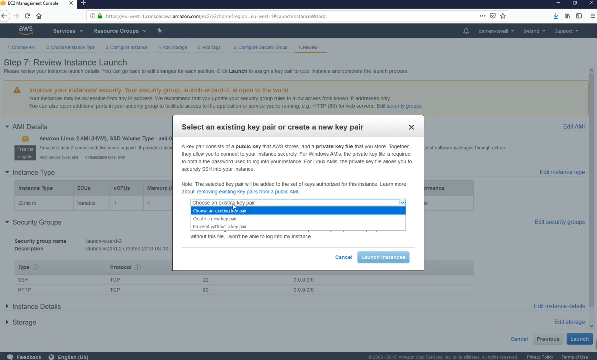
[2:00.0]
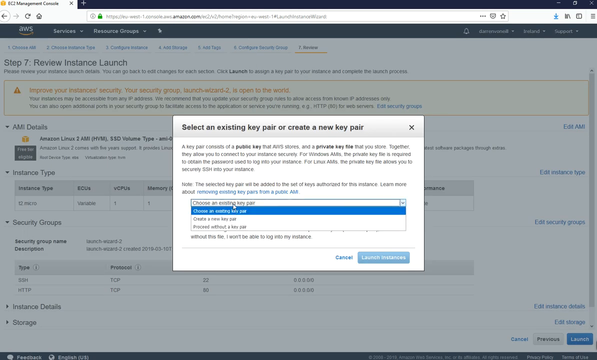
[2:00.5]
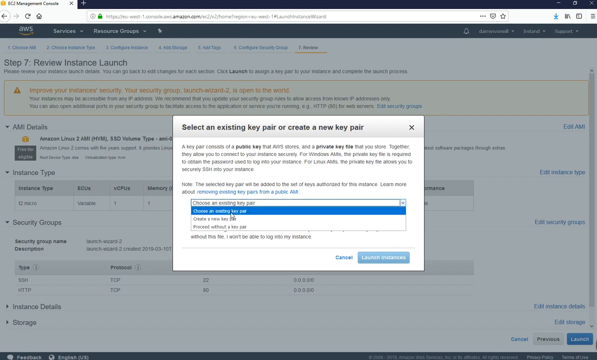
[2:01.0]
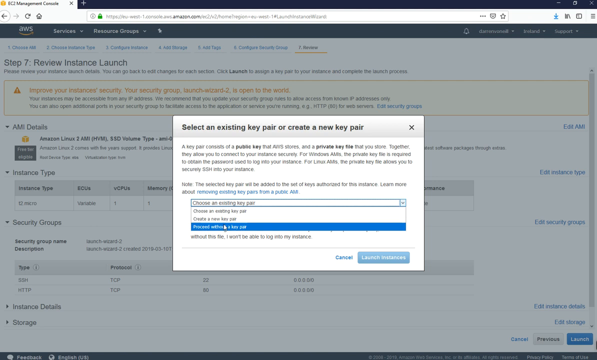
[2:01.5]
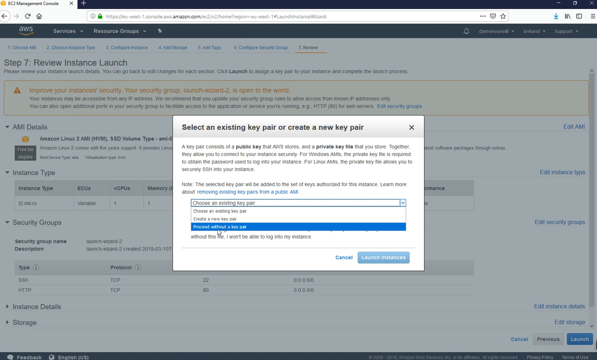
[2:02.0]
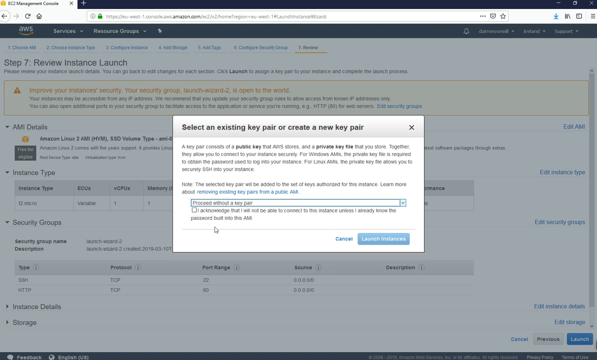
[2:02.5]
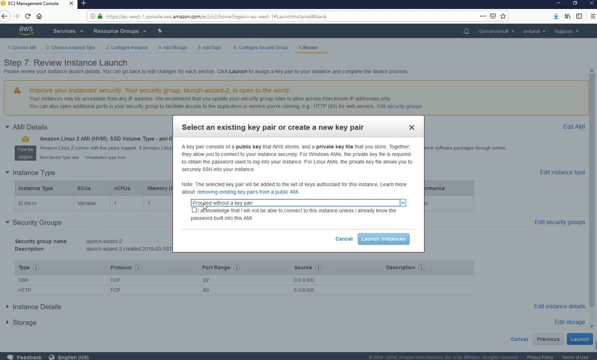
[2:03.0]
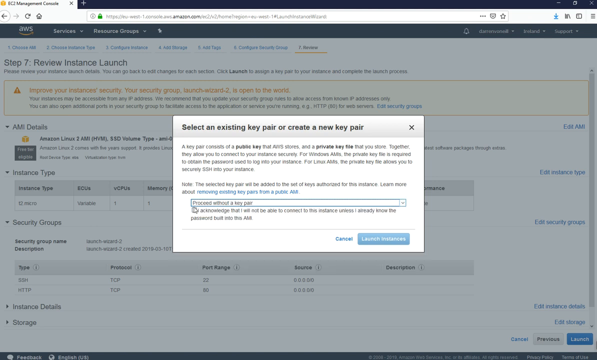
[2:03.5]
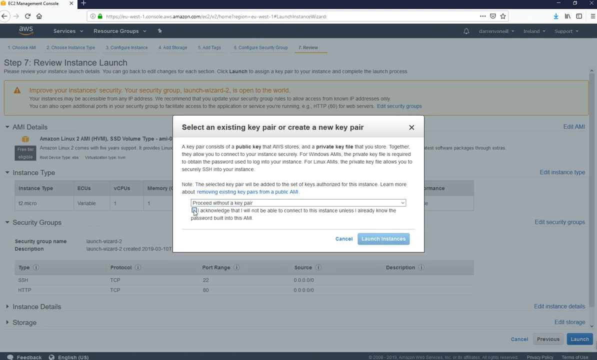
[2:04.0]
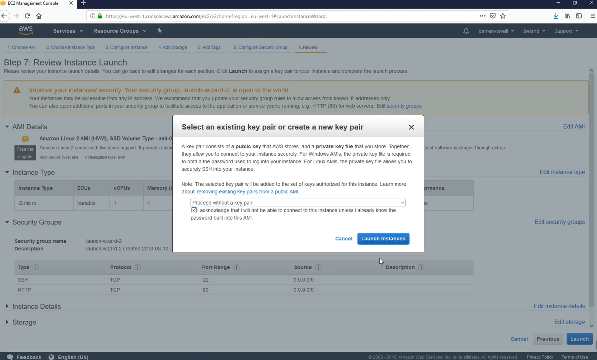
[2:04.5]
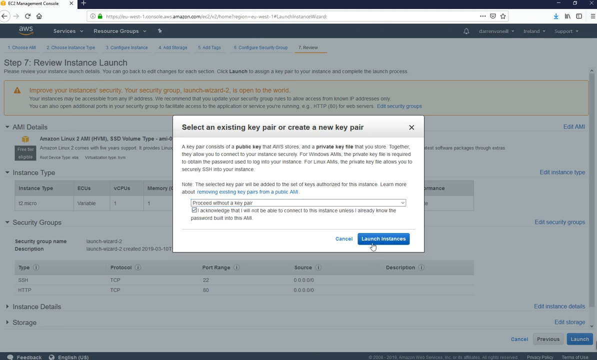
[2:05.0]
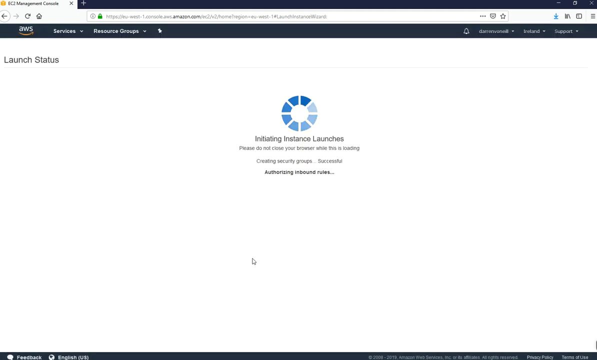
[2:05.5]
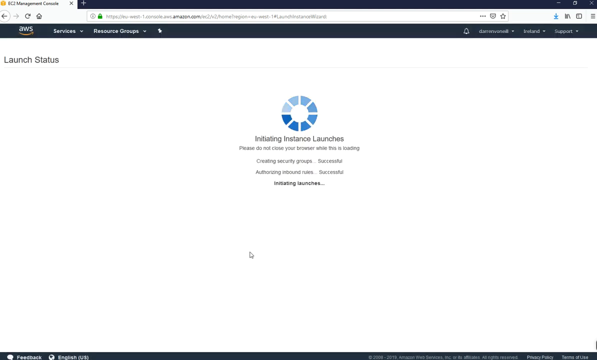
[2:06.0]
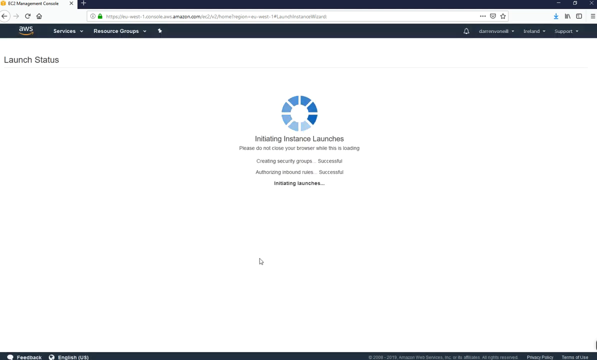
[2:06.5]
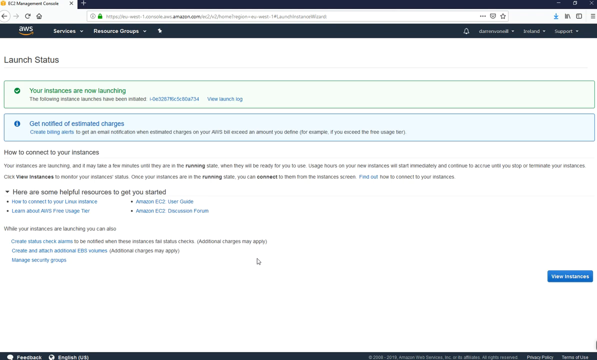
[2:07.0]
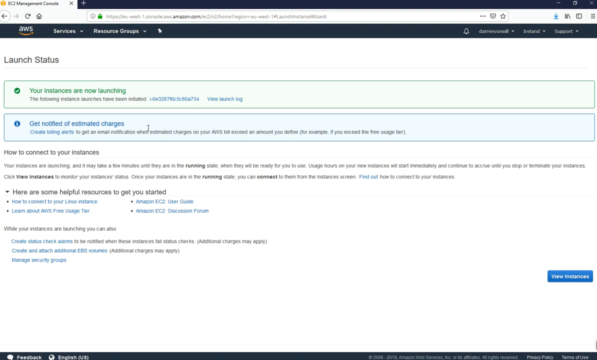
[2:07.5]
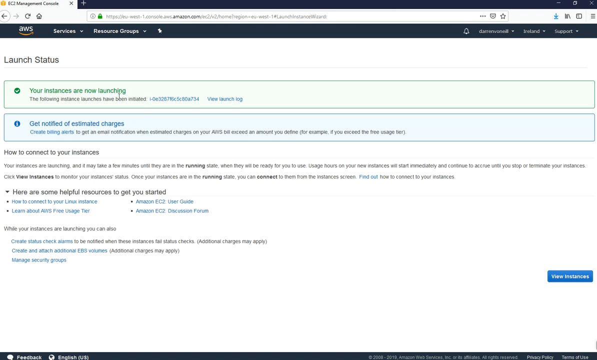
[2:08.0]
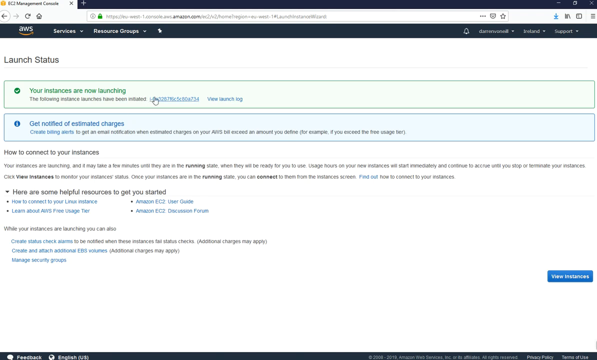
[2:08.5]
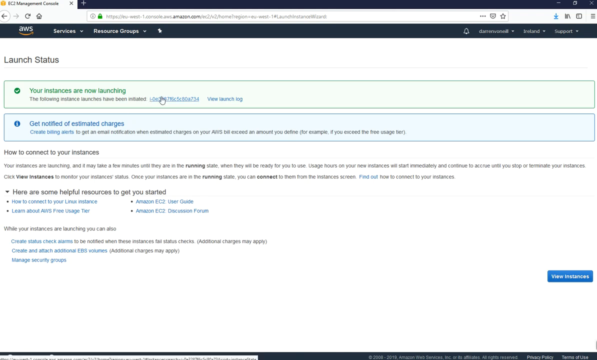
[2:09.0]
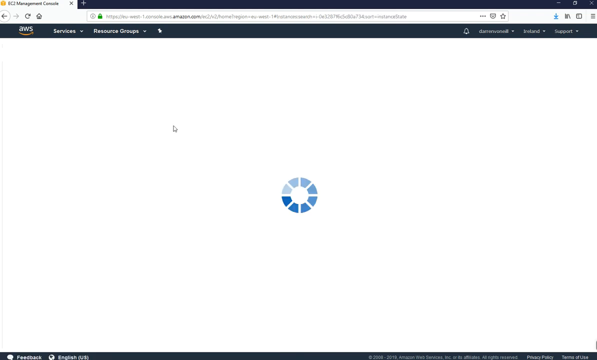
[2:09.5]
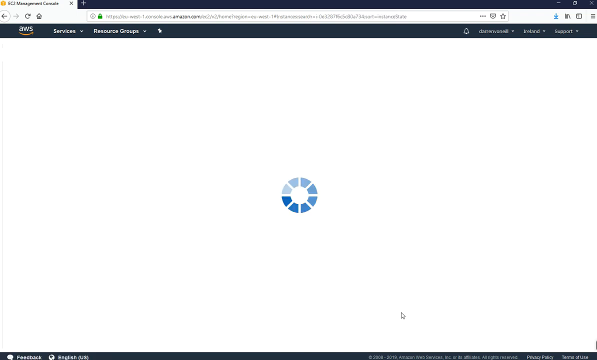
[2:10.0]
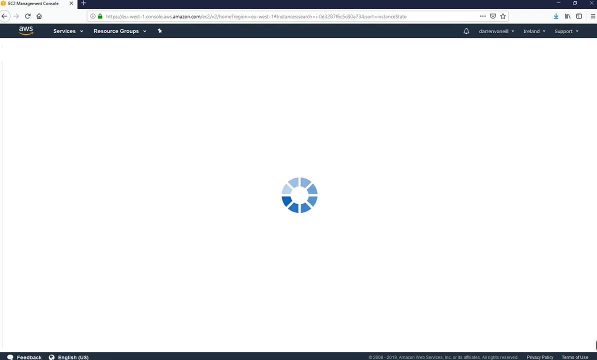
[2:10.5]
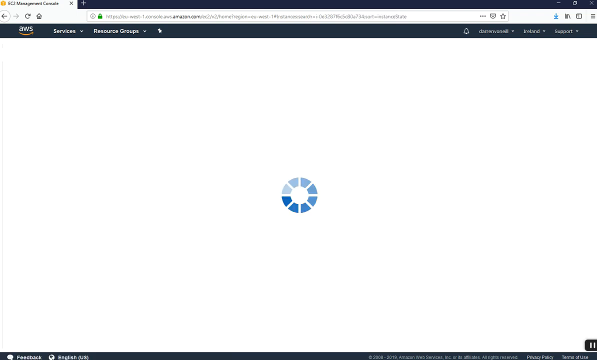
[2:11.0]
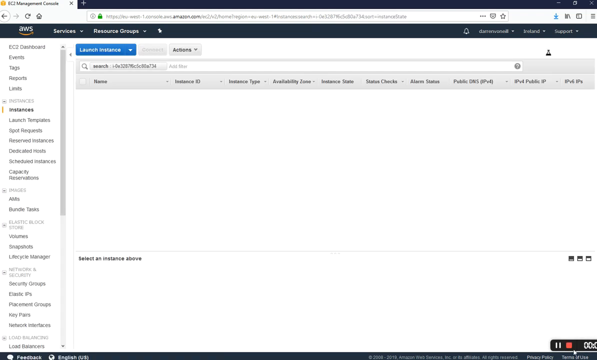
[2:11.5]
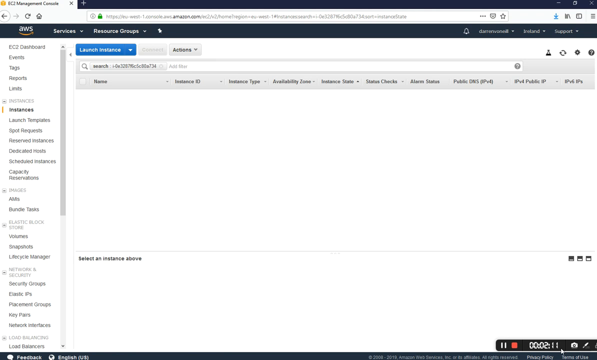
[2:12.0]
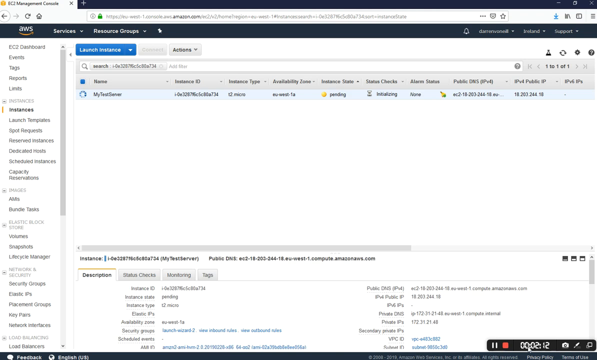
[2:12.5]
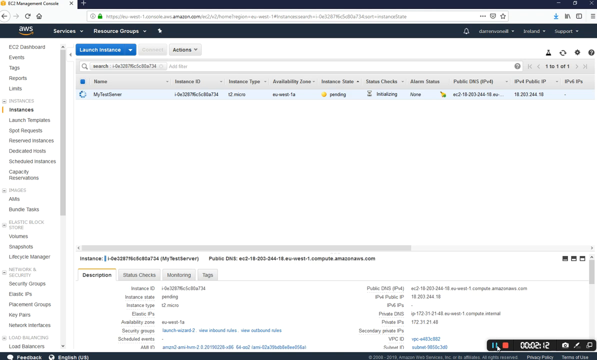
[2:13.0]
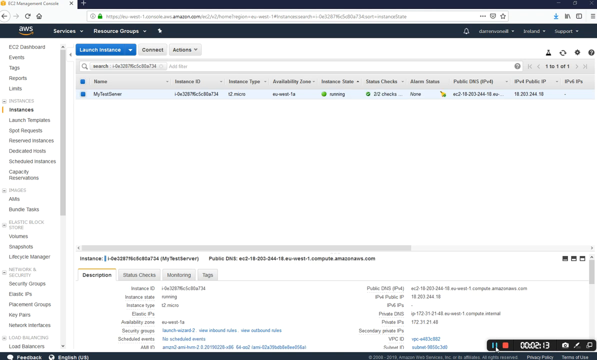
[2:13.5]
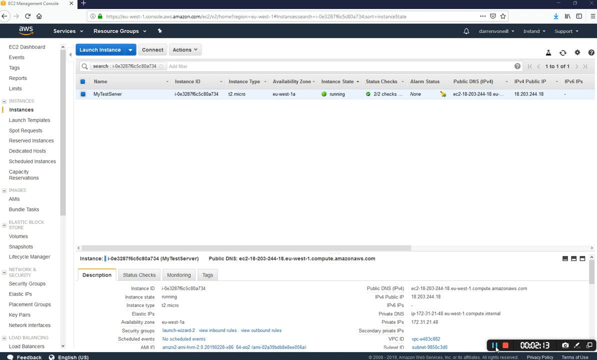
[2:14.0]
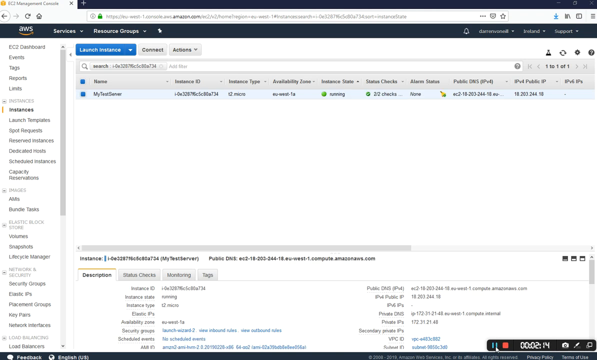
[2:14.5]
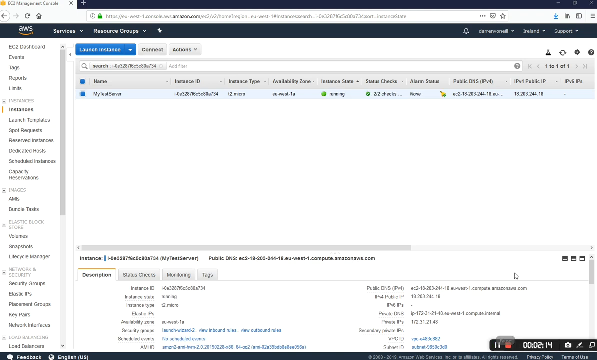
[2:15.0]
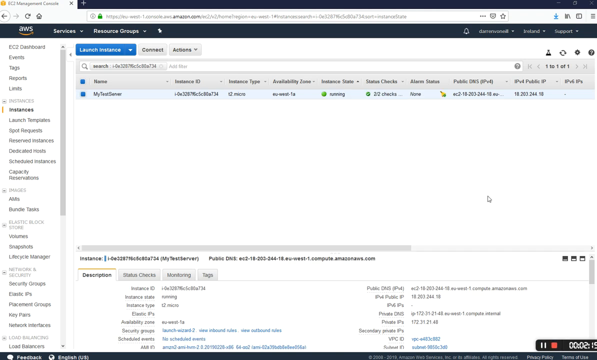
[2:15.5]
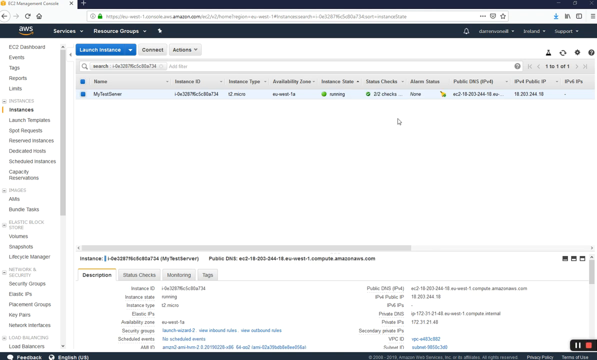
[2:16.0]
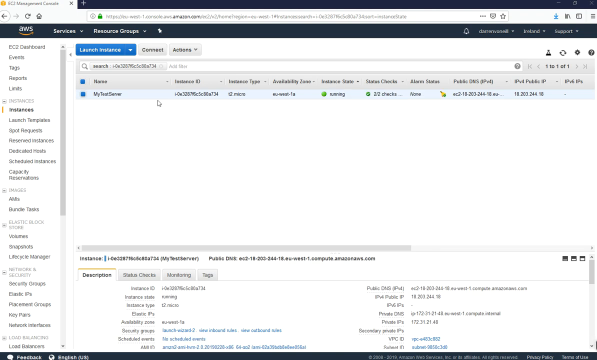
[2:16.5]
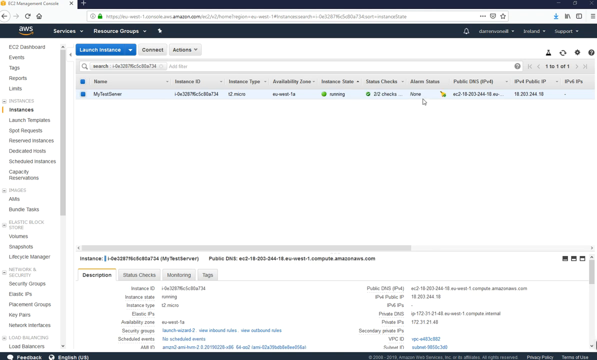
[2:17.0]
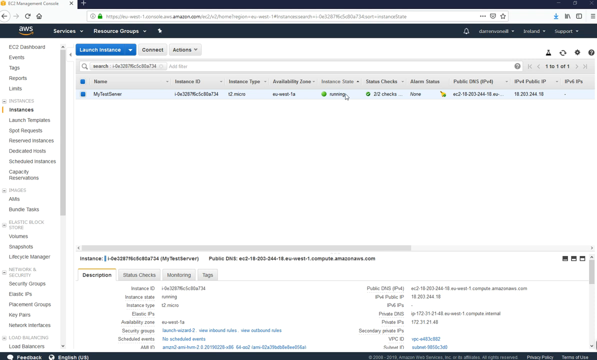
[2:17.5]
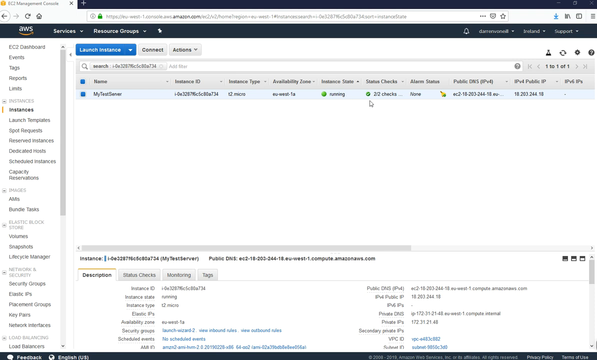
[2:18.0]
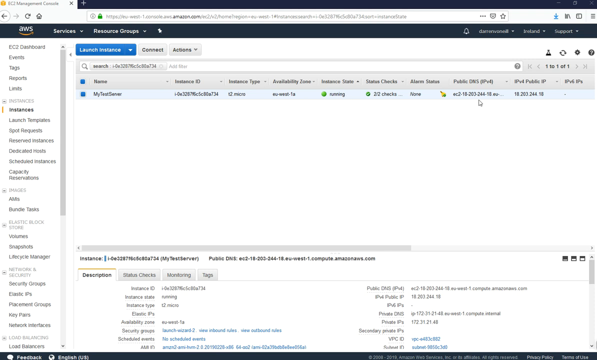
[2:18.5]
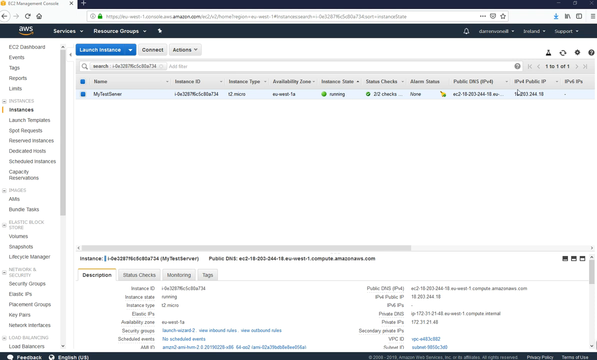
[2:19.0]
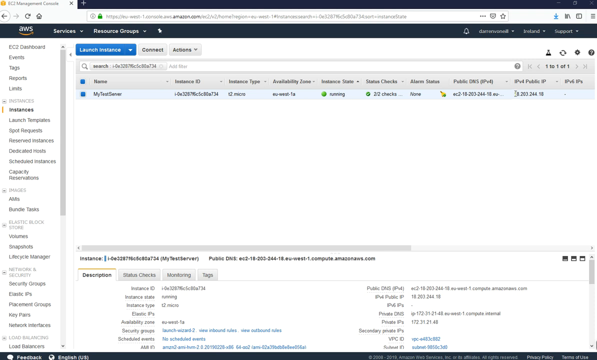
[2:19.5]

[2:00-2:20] A web page on a computer monitor has a pop-up box over it for selecting an existing key pair or creating a new key pair. The cursor has clicked on that section and the drop-down box has opened. Proceed Without a Key Pair is chosen and the acknowledgement agreement is clicked. A new page begins to load with a circular movement indicator, and beneath it the text says "Initiating Instance Launches. Please do not close your browser while this is loading." After the page loads, it shows launch status. The top bar is green with a check mark and says "your instances are now launching", followed by text apparently reading "The following instance launches have been initiated" and "You can also view the launch log." Below that is a light blue shaded bar that says "get notified of estimated charges", then how to connect to your instances, then helpful resources. A button for view instances is at the bottom right. The video transitions to the launch instance page, with two entries at the top and a search bar, and the cursor moves around the page.